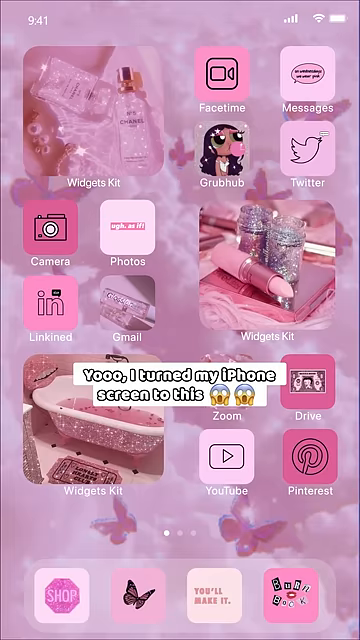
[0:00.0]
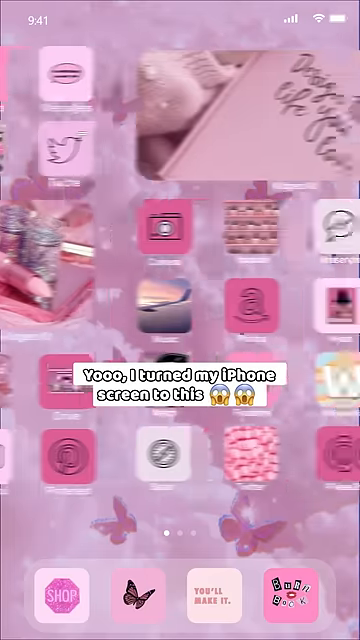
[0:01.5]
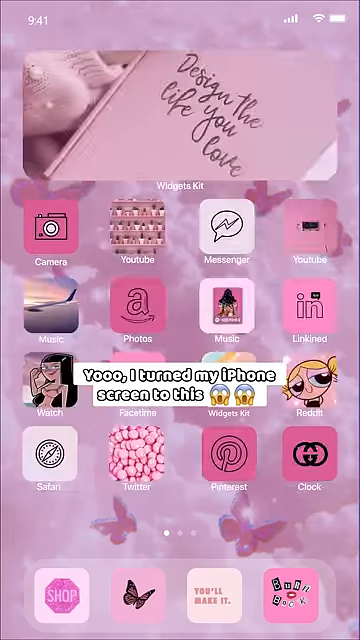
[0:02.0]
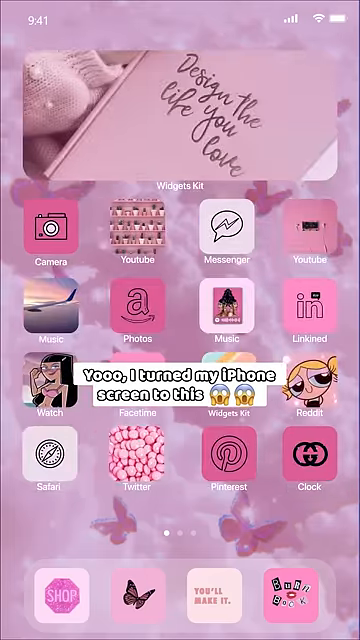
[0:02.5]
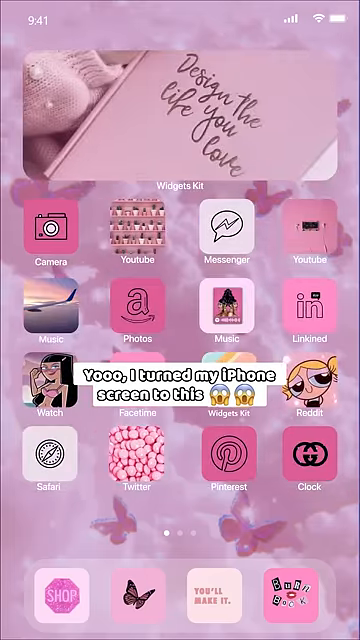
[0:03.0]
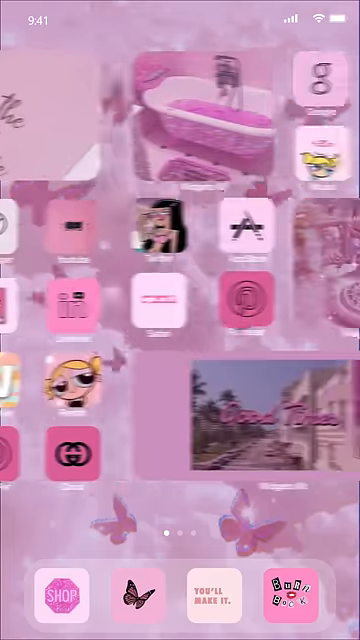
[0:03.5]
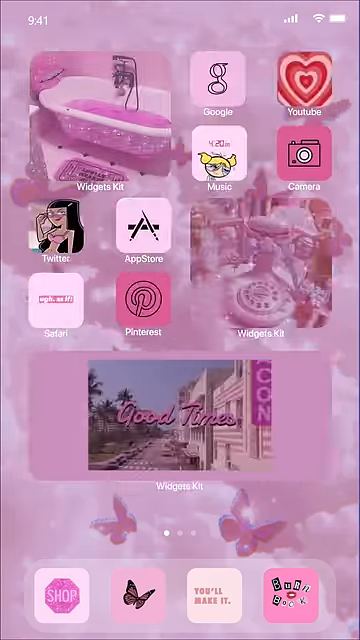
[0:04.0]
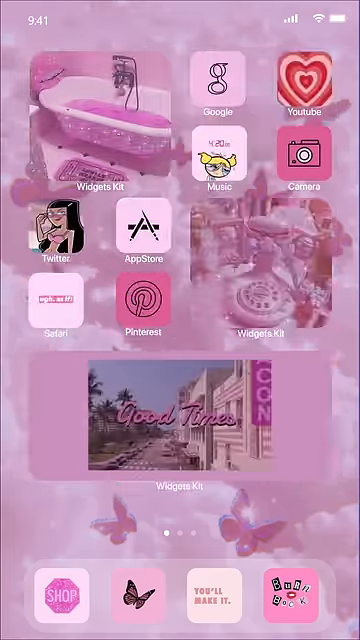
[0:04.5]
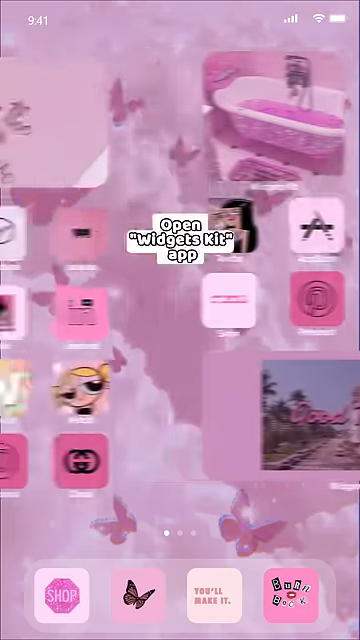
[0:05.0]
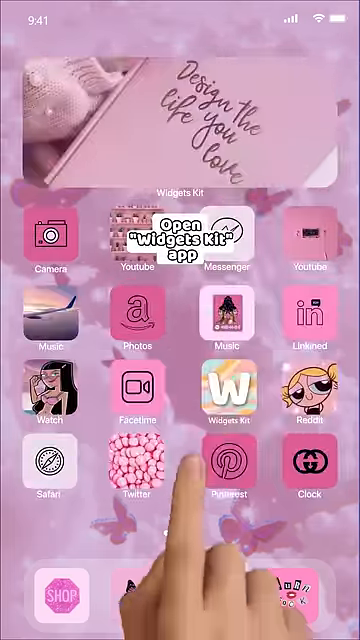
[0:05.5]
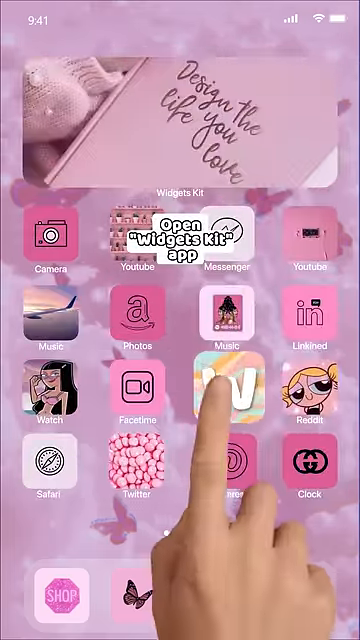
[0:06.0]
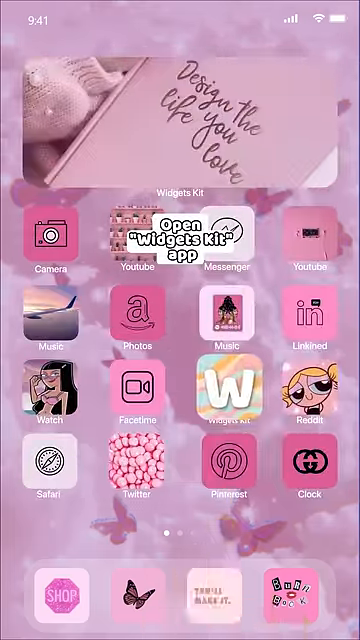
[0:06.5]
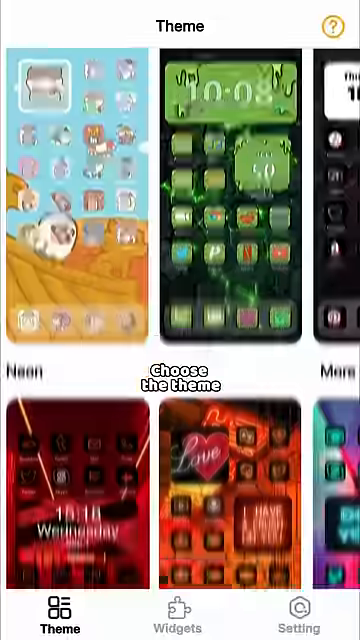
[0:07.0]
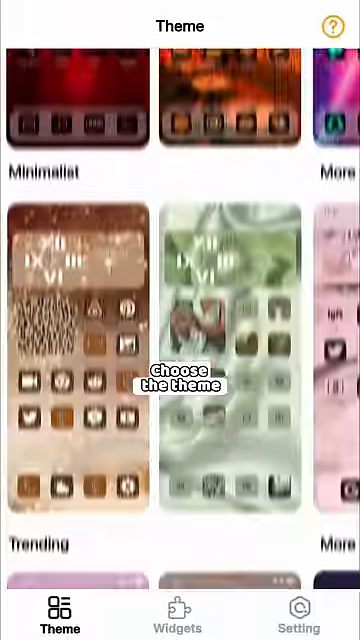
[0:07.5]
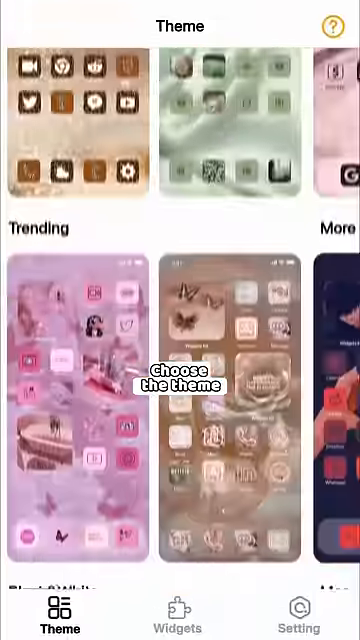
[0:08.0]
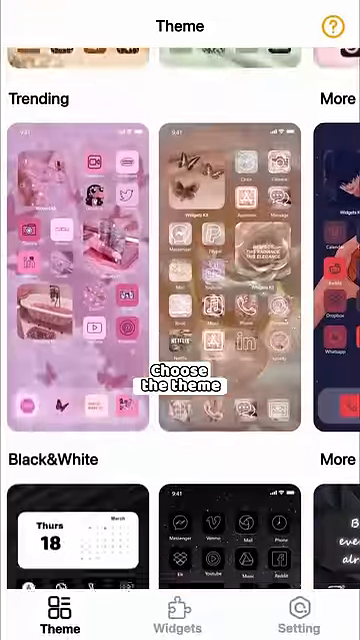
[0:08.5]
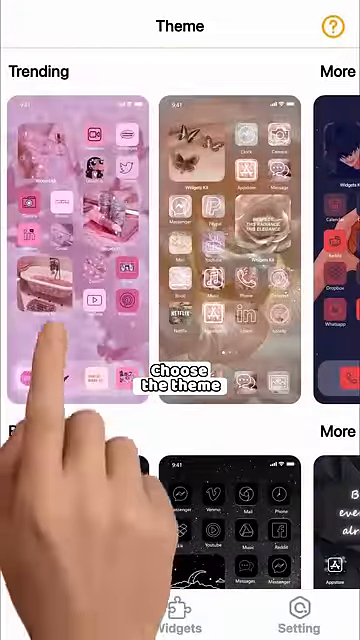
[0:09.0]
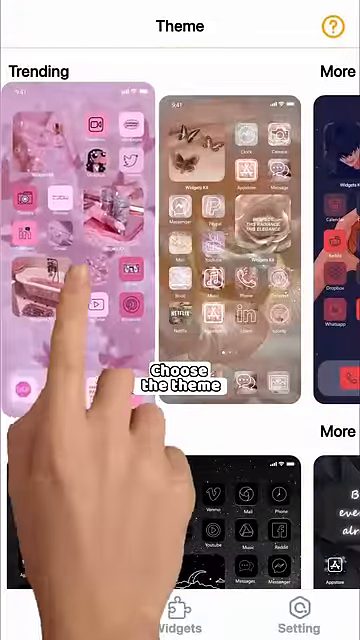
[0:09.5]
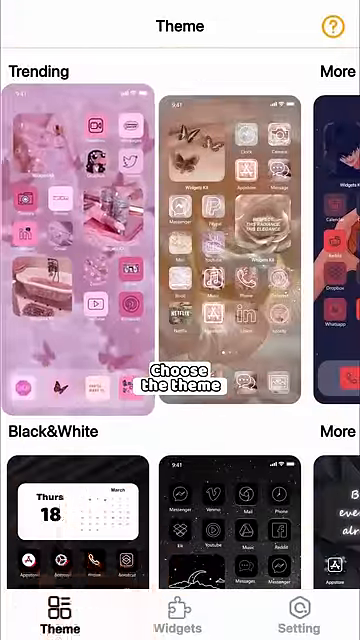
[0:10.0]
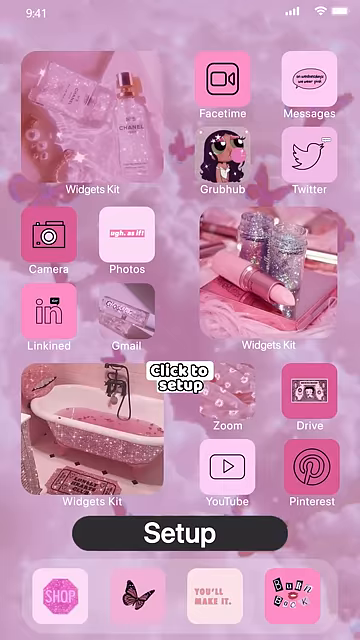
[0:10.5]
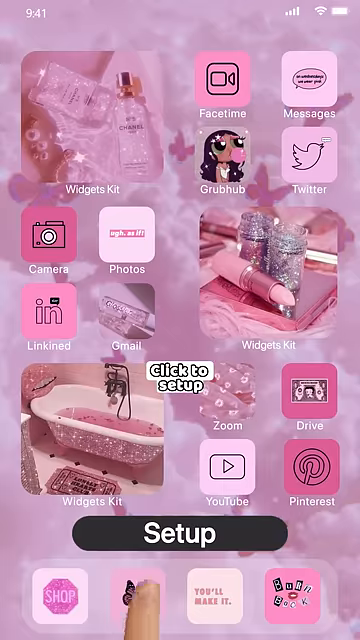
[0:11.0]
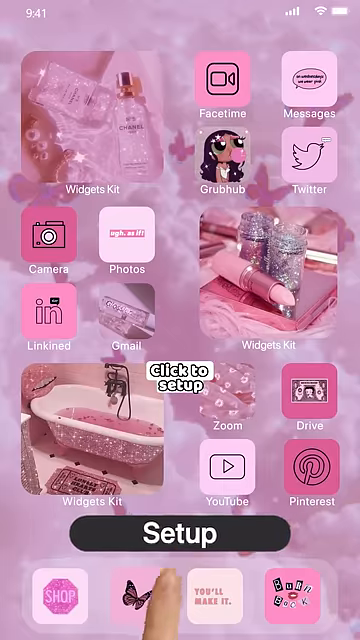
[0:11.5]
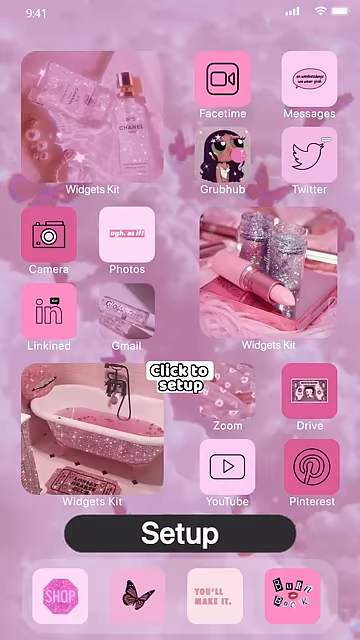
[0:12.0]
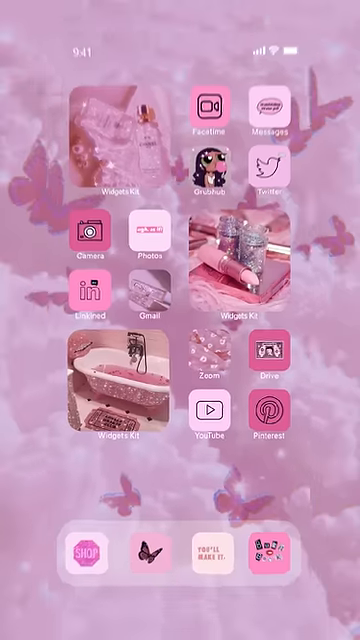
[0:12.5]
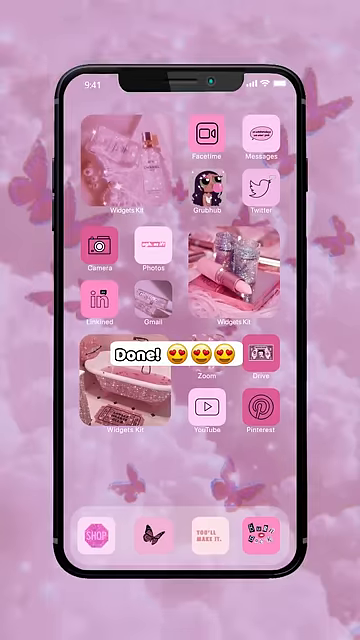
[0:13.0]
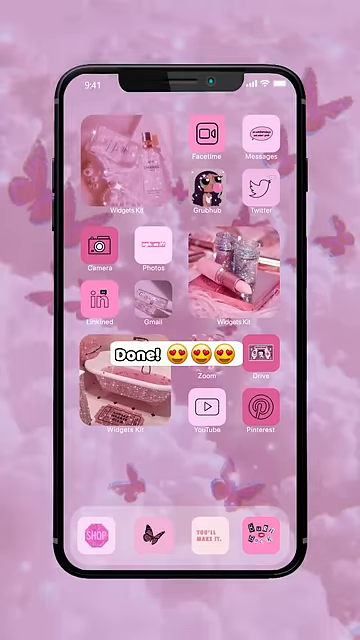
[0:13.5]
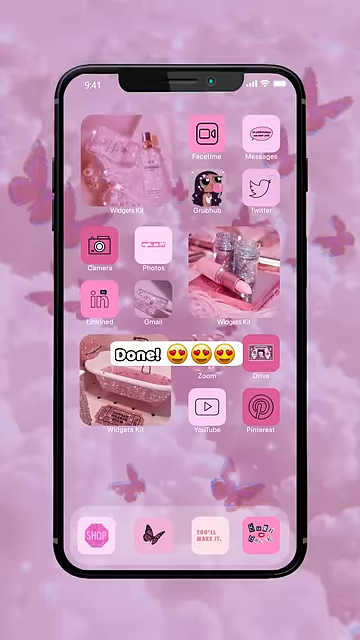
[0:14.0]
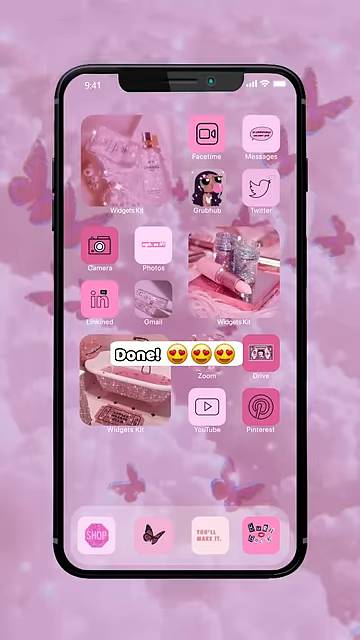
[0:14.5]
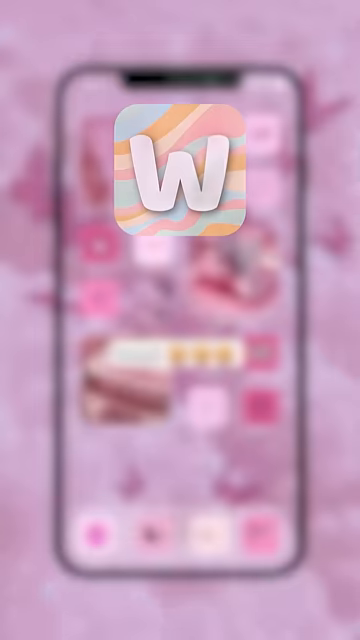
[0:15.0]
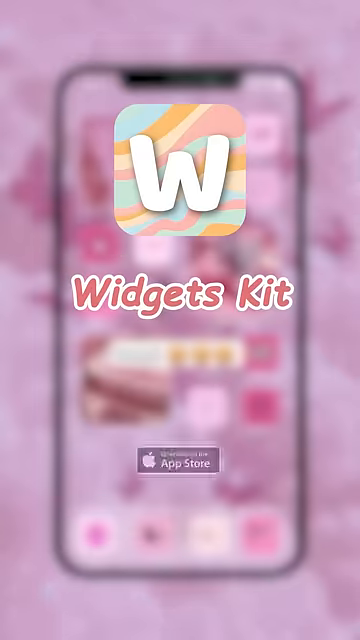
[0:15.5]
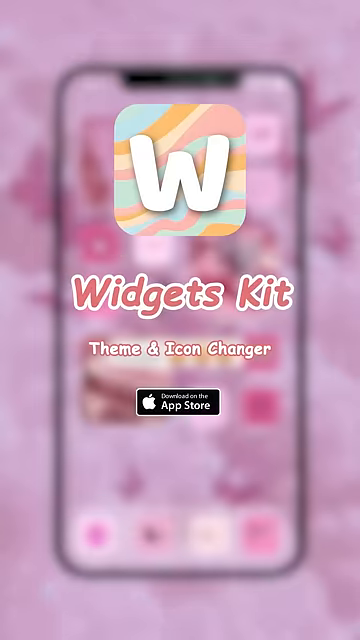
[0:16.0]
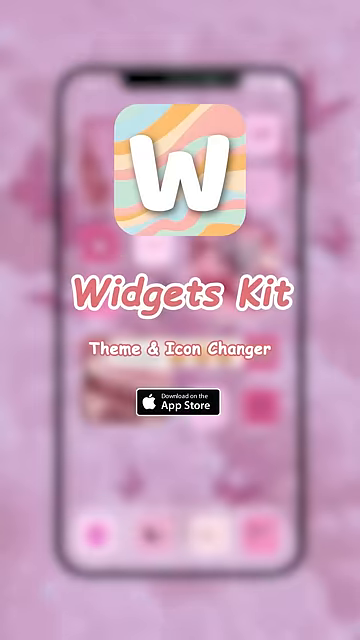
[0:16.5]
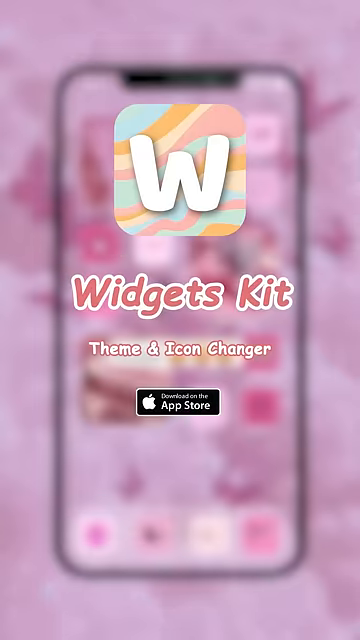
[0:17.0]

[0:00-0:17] The video shows what is sort of a widget kit for a phone, a theme and icon changer where different patterns and colors can be selected. A person chooses a pink one. A setup button appears, they click on it, and then a design can be chosen. The designs are all different shades of pink, such as light pink and hot pink, and one of the widgets apparently has red in a heart shape.